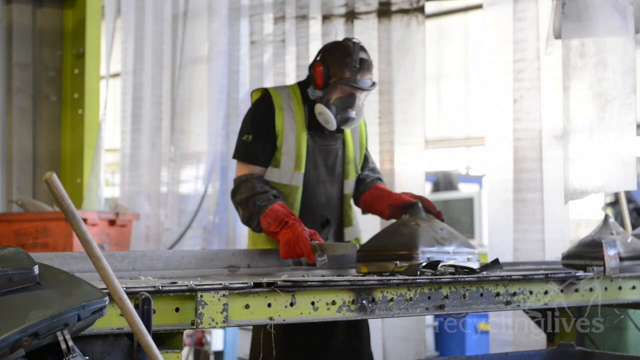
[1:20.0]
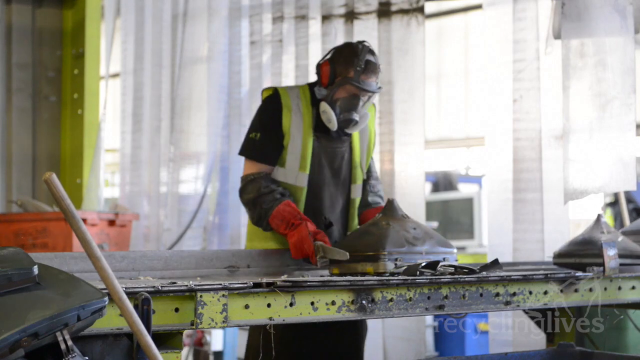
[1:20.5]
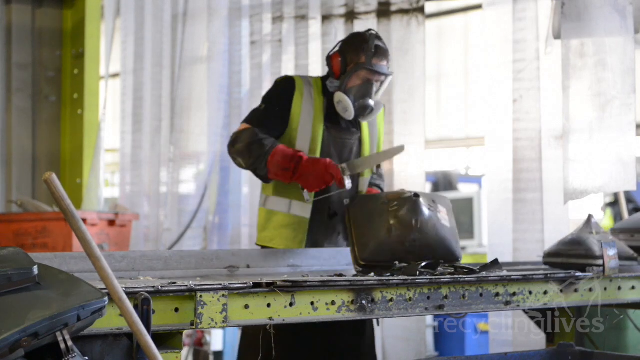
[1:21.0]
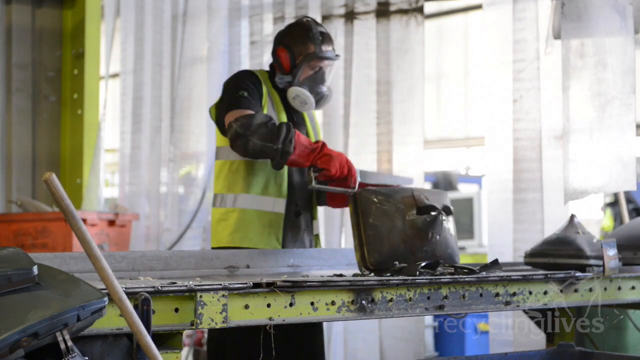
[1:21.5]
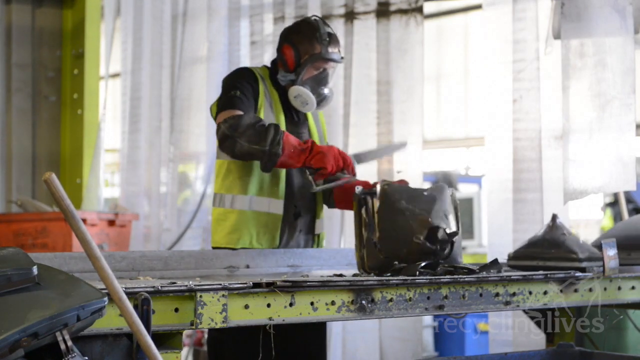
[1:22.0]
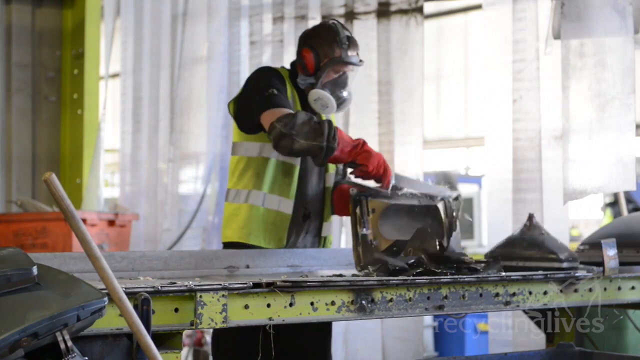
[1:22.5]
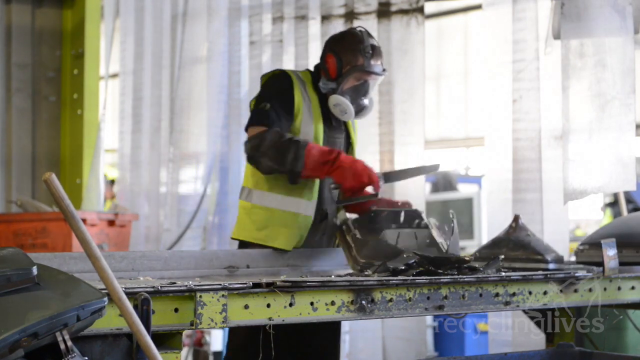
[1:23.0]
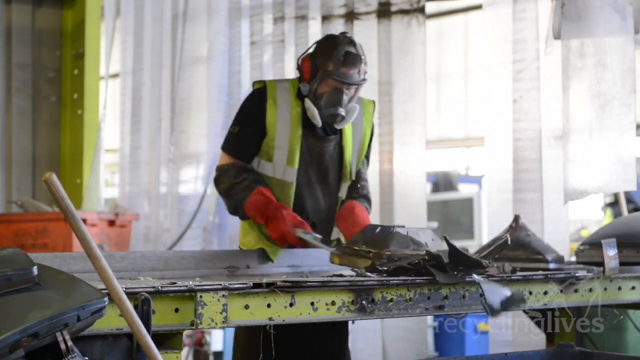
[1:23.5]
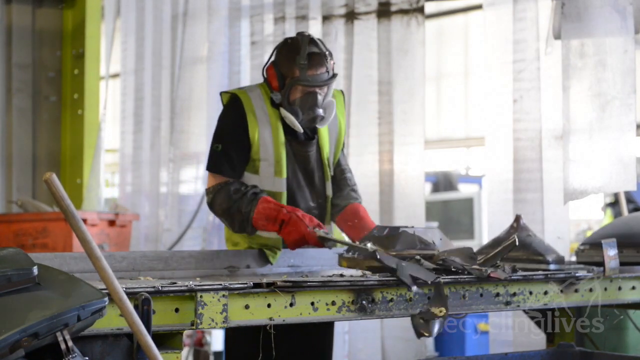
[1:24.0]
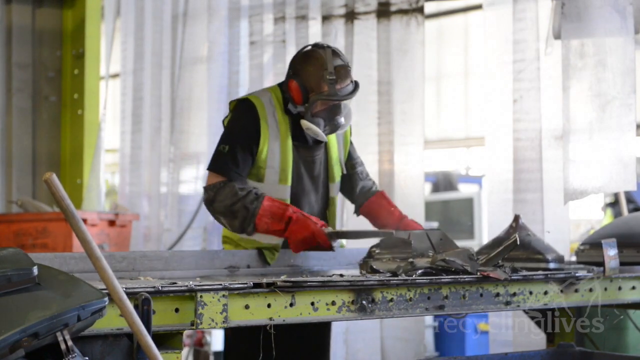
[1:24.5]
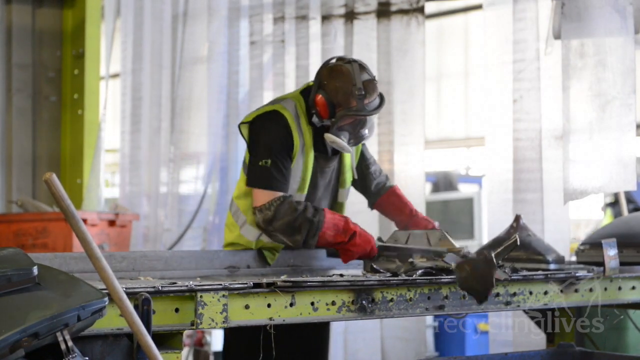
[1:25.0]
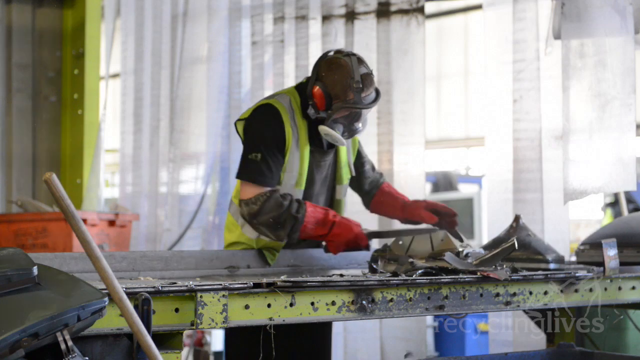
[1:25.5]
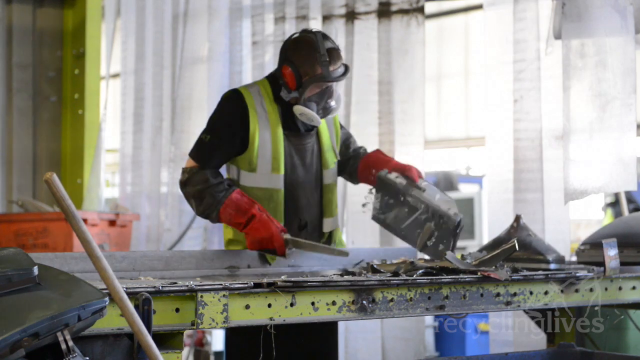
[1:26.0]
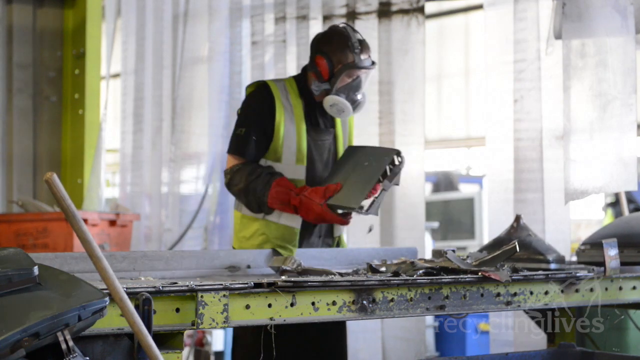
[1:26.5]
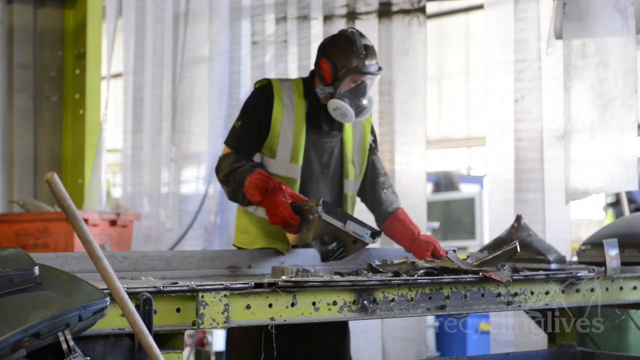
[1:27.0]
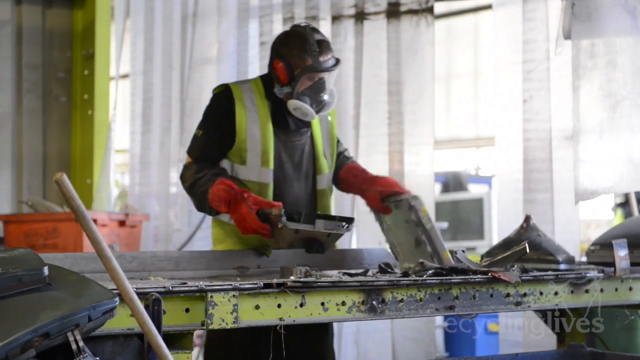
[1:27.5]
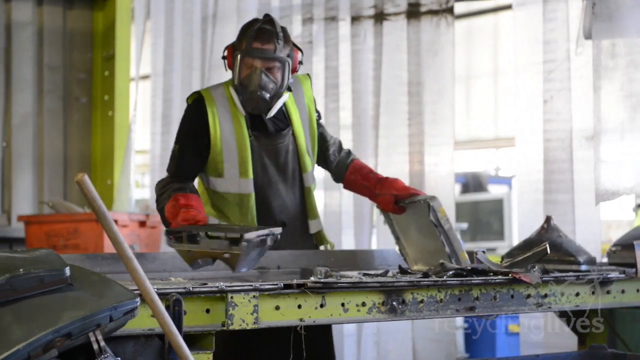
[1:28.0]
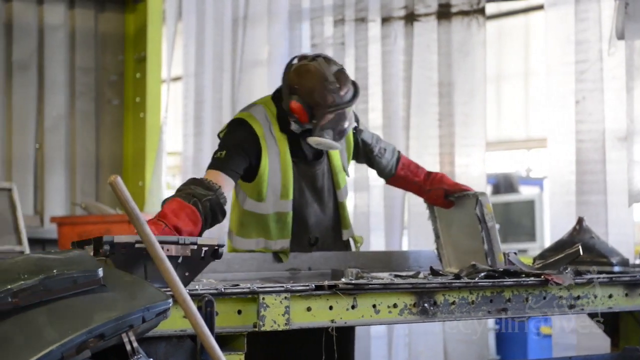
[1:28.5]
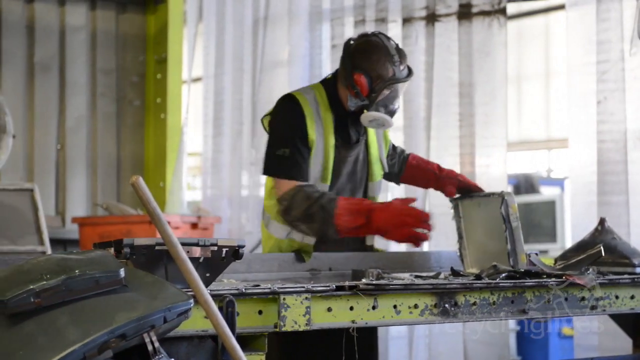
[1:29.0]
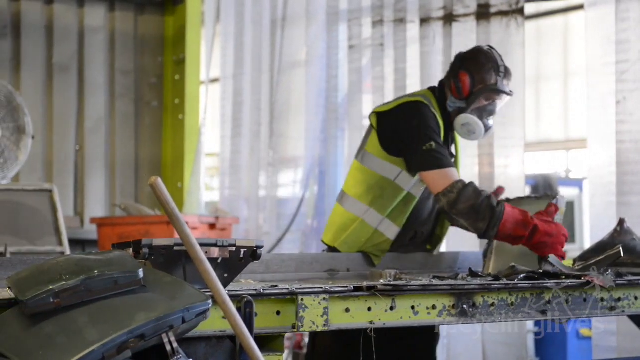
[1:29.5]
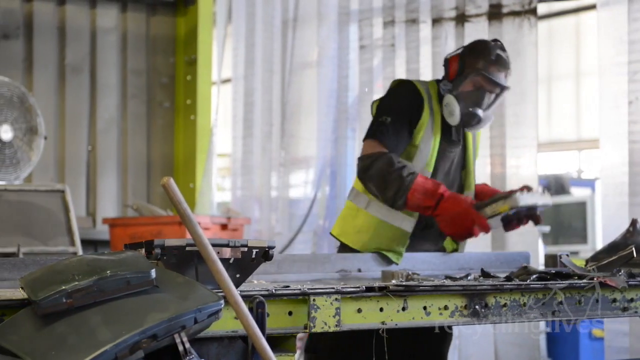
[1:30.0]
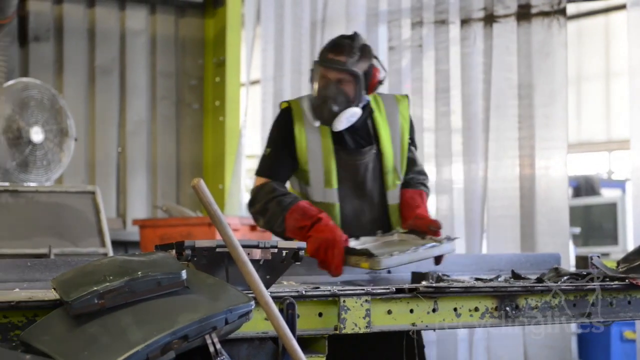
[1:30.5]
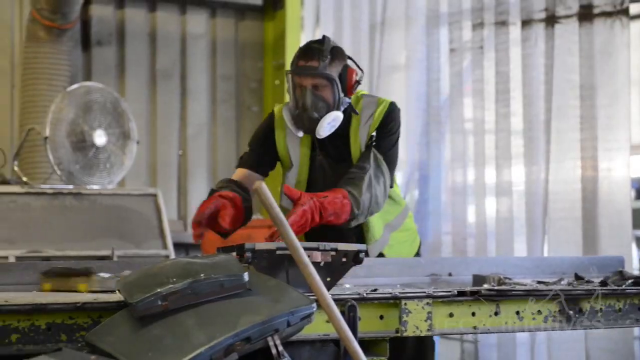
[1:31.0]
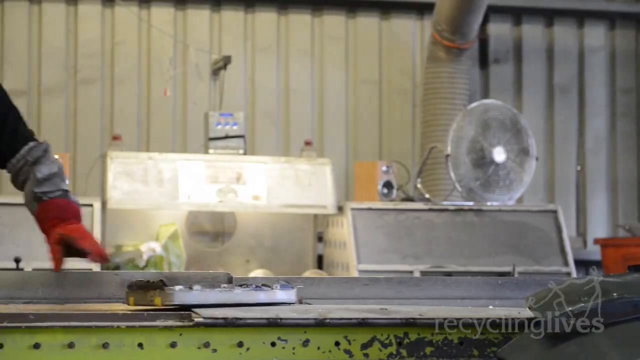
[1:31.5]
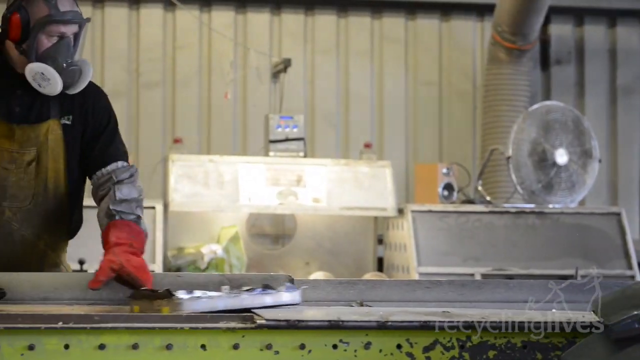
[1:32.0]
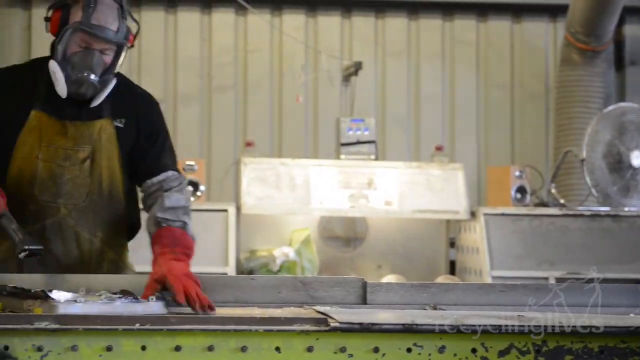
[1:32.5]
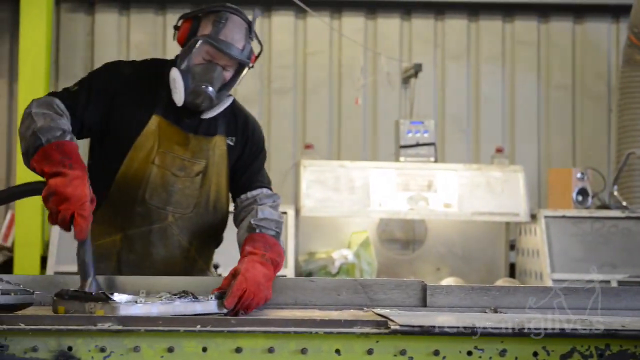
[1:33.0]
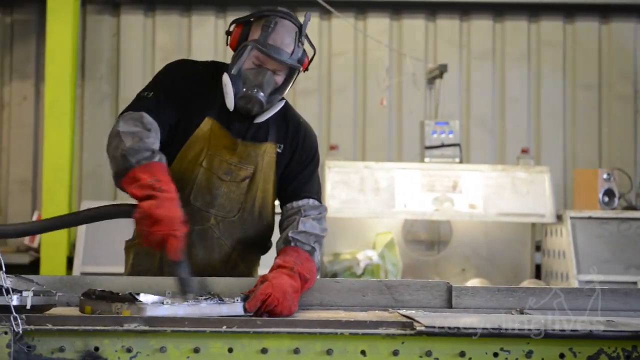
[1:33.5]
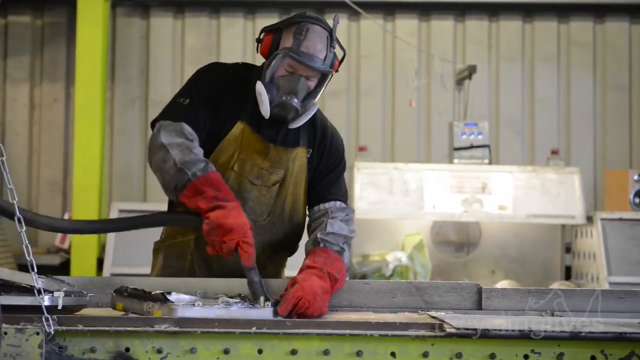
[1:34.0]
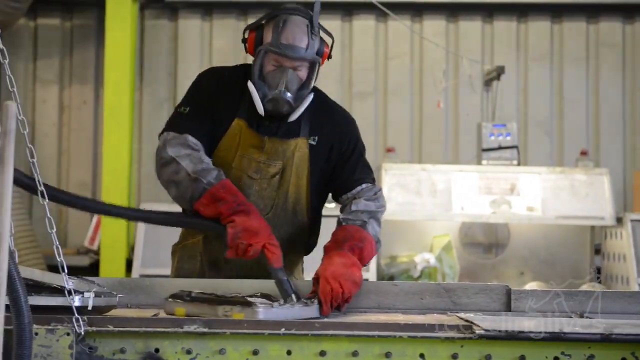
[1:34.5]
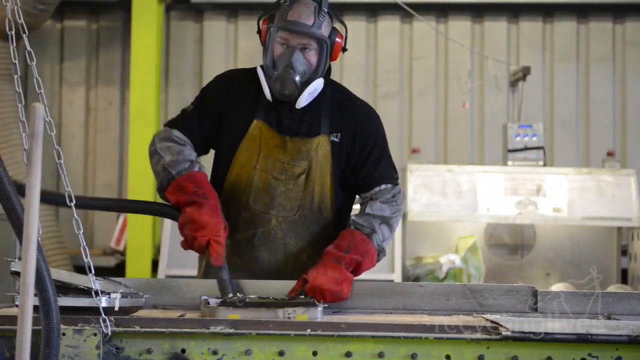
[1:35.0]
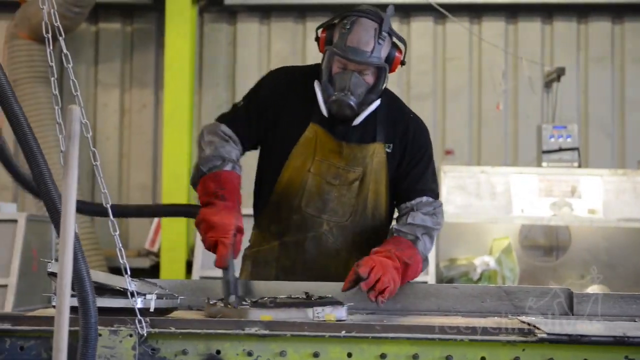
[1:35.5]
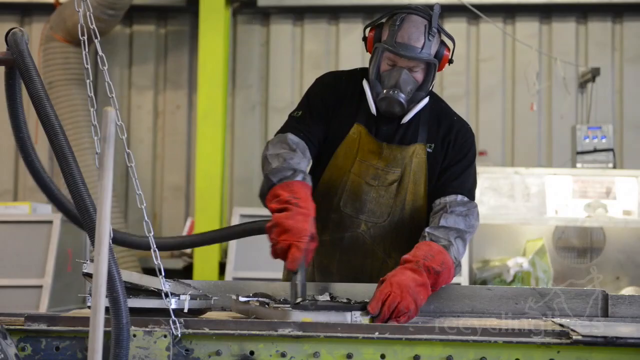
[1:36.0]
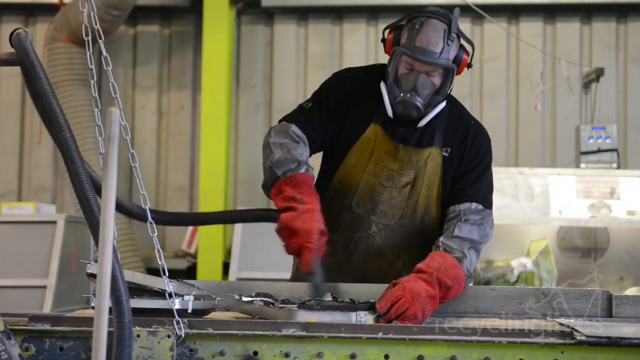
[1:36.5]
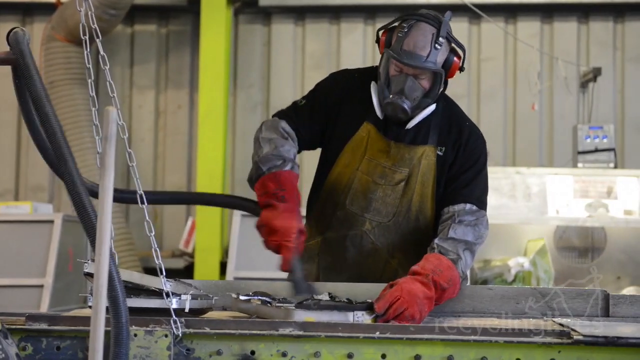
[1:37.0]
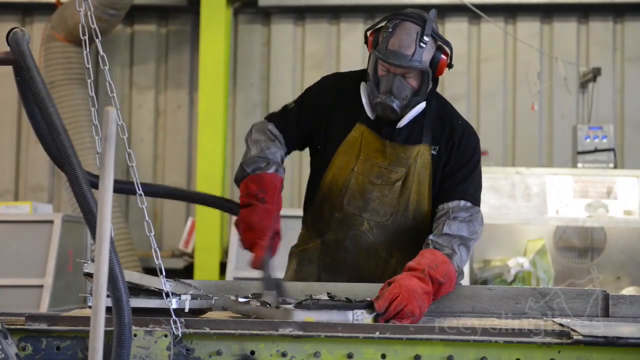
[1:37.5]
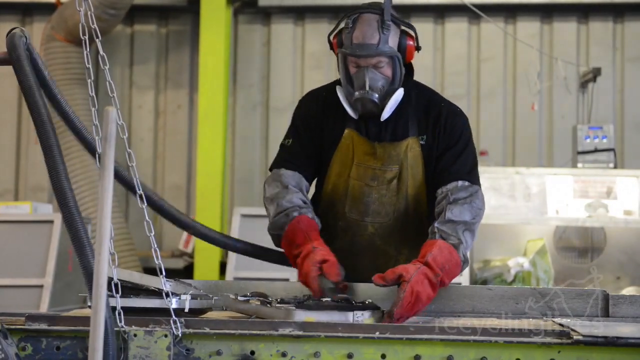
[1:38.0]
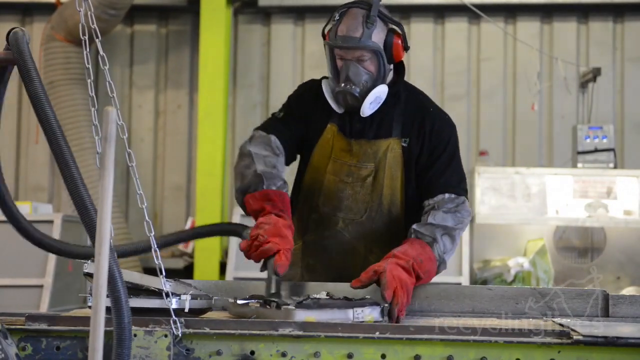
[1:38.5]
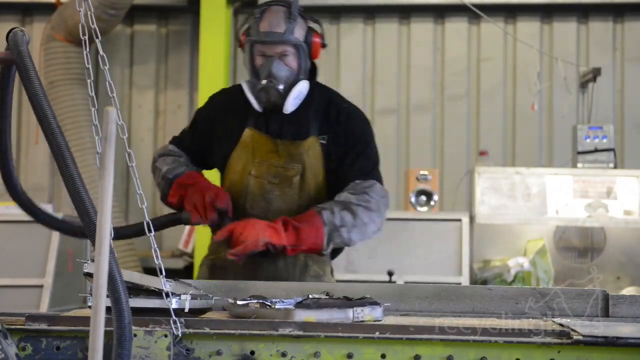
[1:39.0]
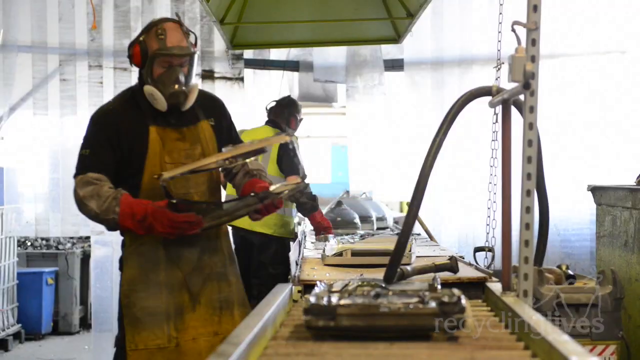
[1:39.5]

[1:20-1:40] Inside a warehouse, a man wearing a gas mask, a yellow and gray safety vest, red gloves and a black shirt has part of an old TV on a conveyor belt. Using some kind of knife, he taps it and the black casing falls off onto the conveyor belt; he smacks the side and more debris falls off, leaving a silver frame, which he slides down the conveyor belt. Then somebody else, maybe the same person, scrubs the inside with some kind of hose or tool, cleaning it out. The wall behind him might be corrugated sheet metal painted gray, and there are boxes behind him. Gray chains are attached to the conveyor belt and might be attached to the ceiling. It is a daytime scene, with light pouring in through the windows behind; there might be an open doorway with loose curtains or sheets hanging over the entrance. In the back there is a round fan and what appears to be some kind of box lit up from the inside, and possibly a control panel attached to the wall, though it is unclear because it is so far away. There is also a trash can or bin that may be blue or silver metal.